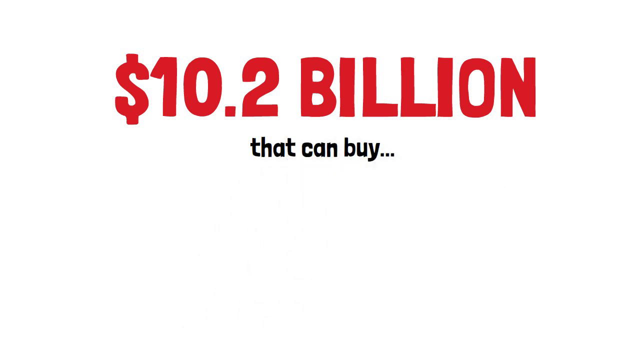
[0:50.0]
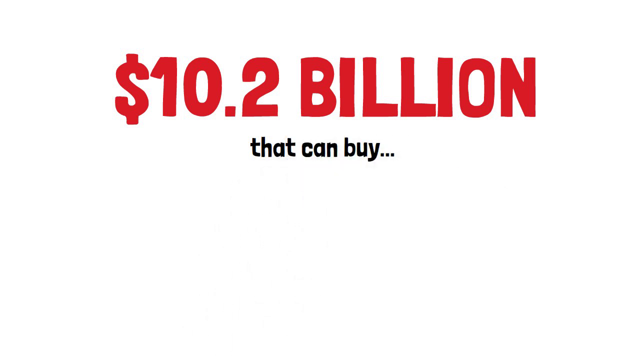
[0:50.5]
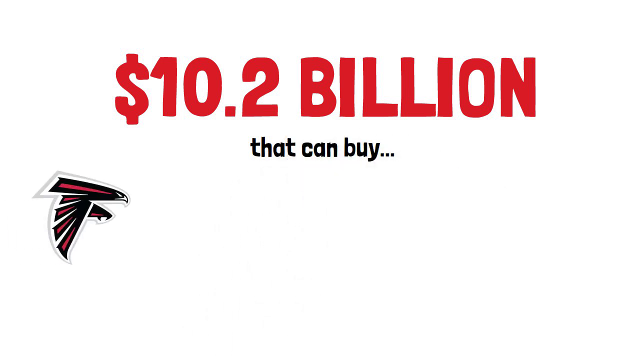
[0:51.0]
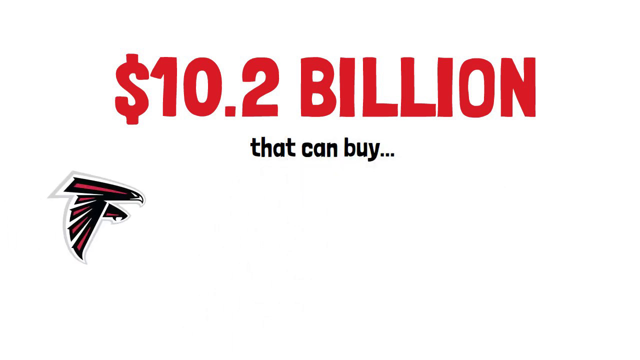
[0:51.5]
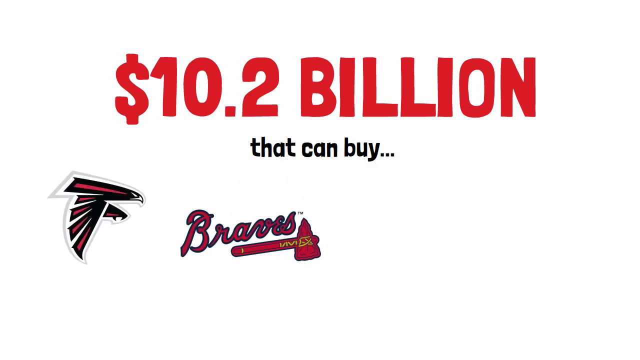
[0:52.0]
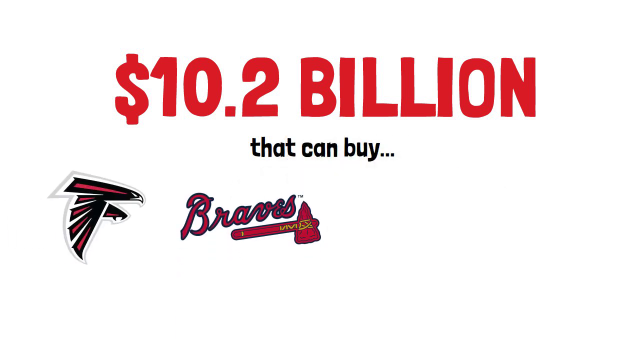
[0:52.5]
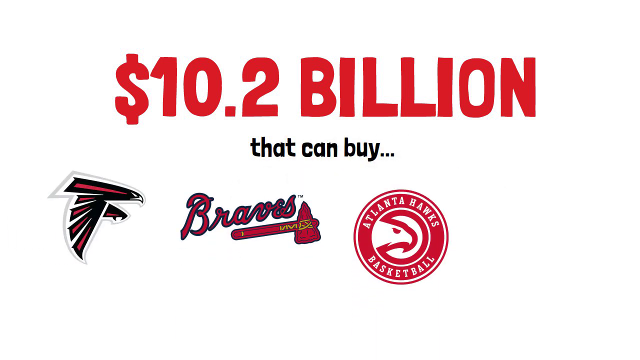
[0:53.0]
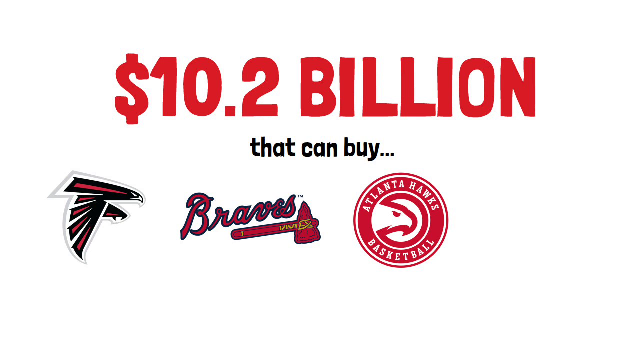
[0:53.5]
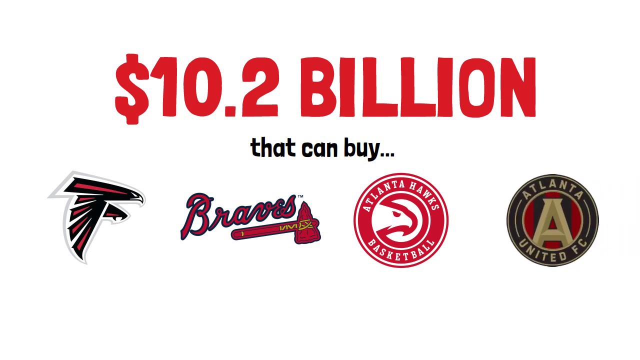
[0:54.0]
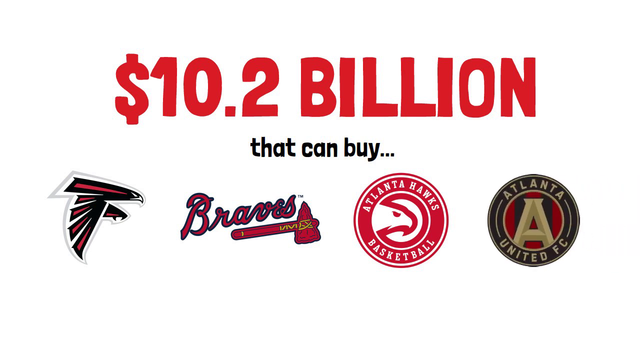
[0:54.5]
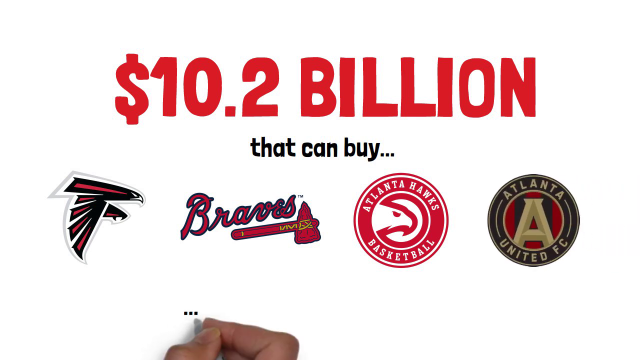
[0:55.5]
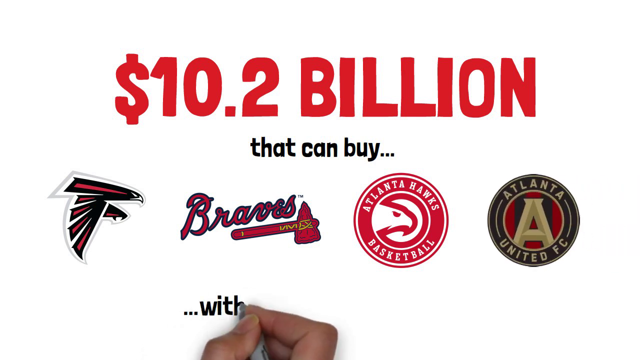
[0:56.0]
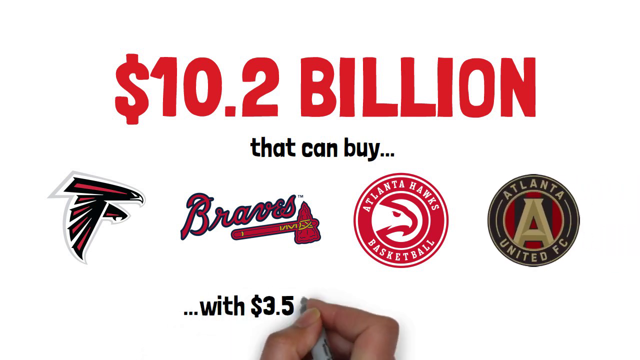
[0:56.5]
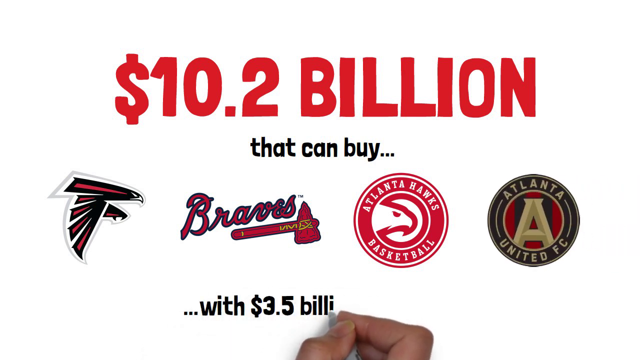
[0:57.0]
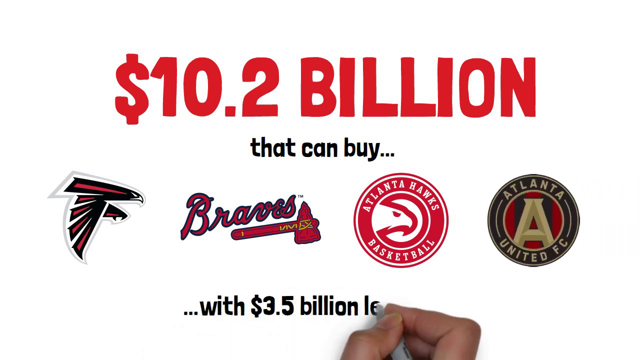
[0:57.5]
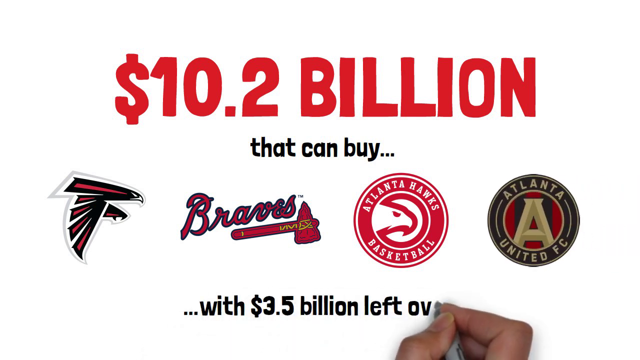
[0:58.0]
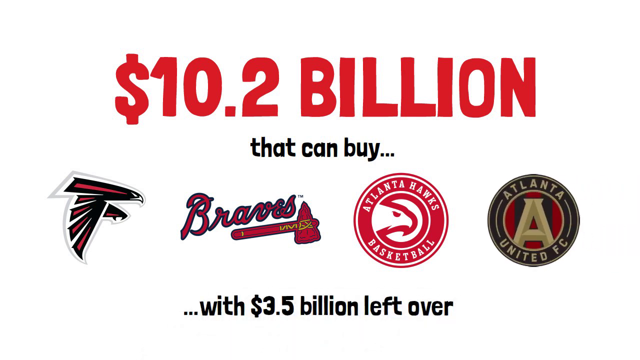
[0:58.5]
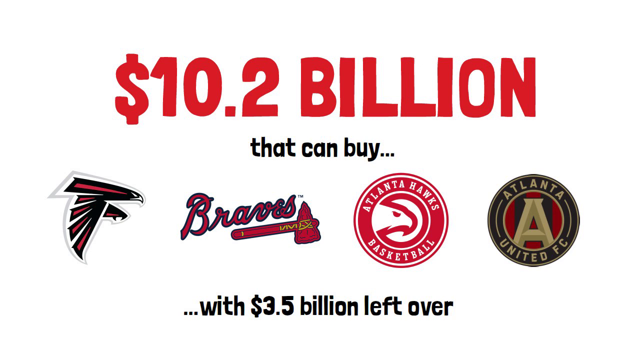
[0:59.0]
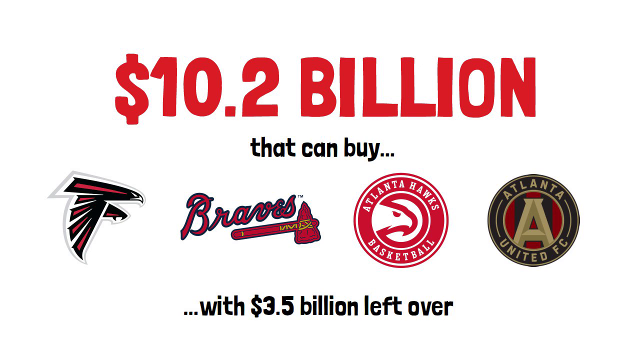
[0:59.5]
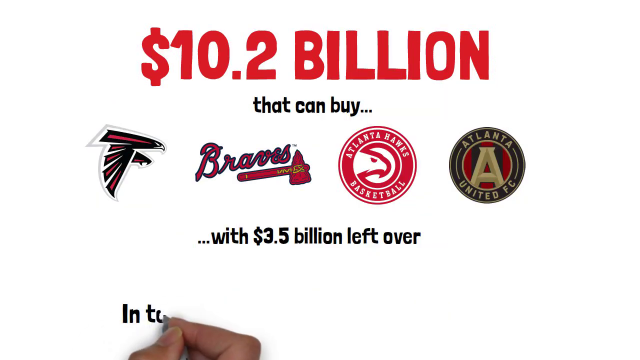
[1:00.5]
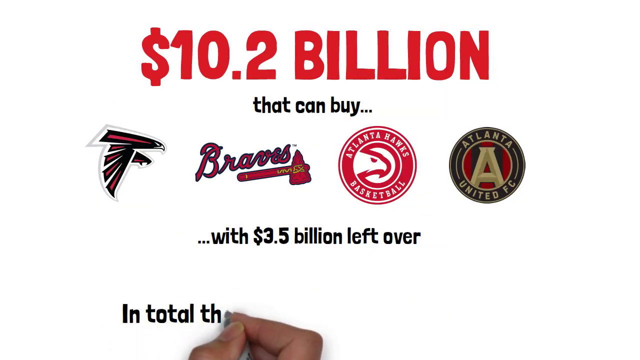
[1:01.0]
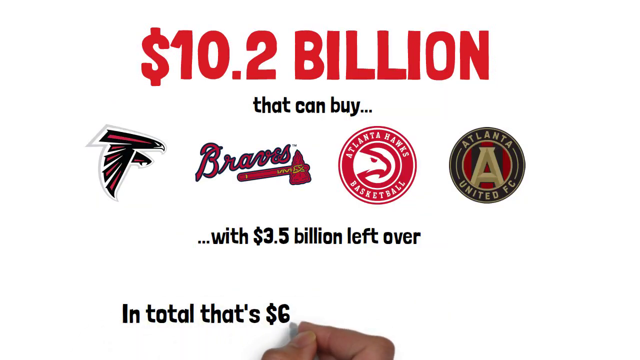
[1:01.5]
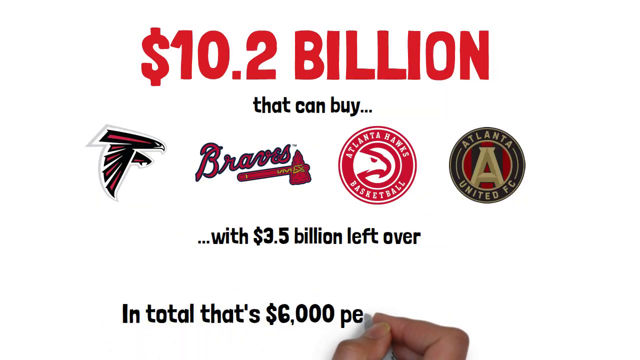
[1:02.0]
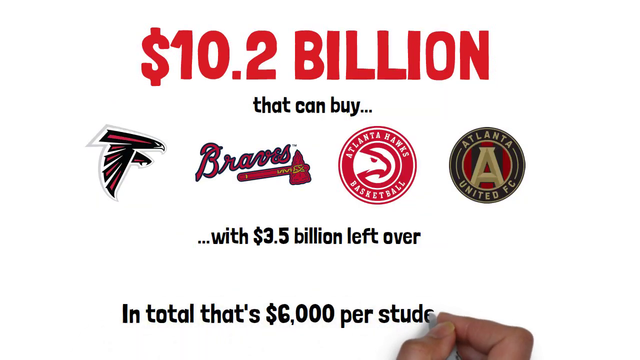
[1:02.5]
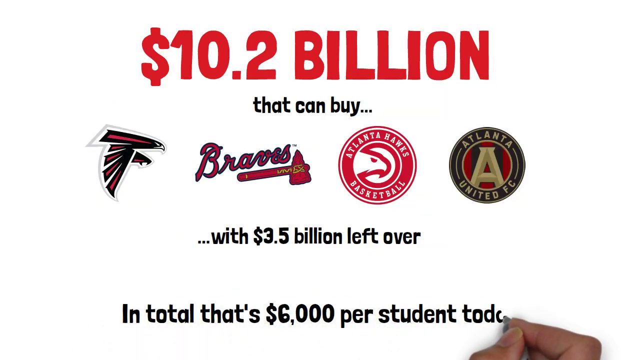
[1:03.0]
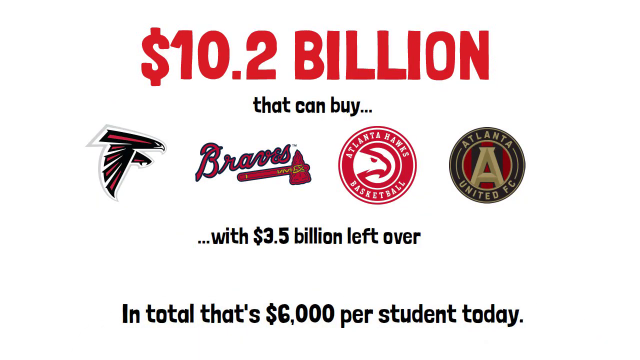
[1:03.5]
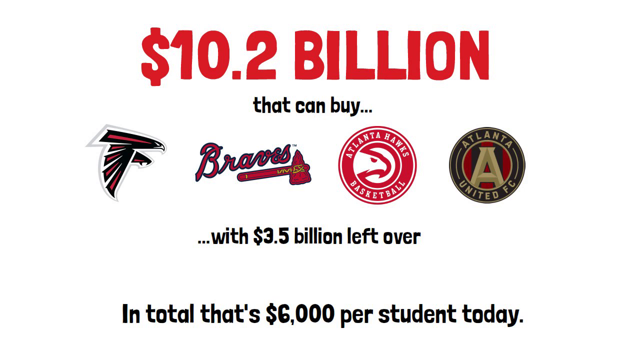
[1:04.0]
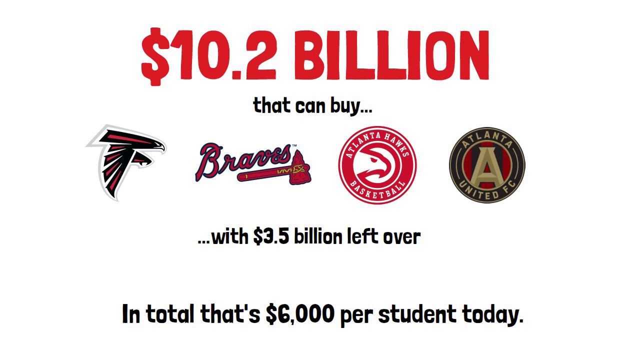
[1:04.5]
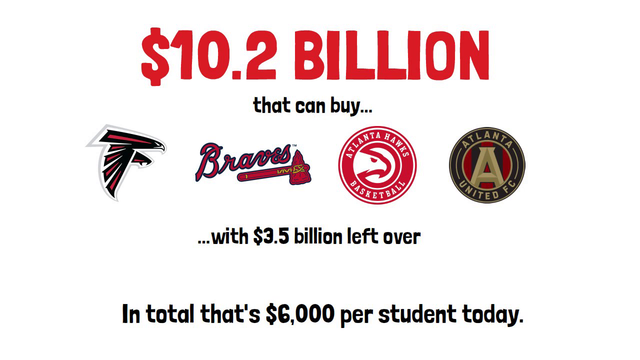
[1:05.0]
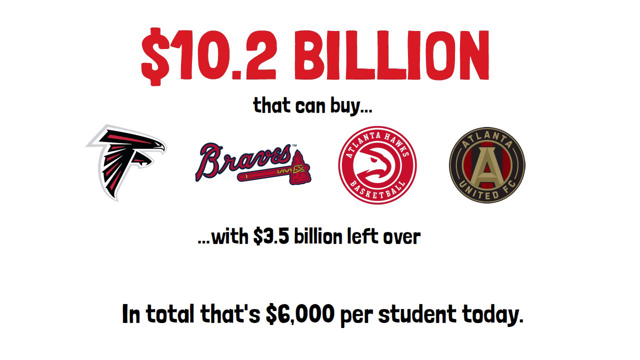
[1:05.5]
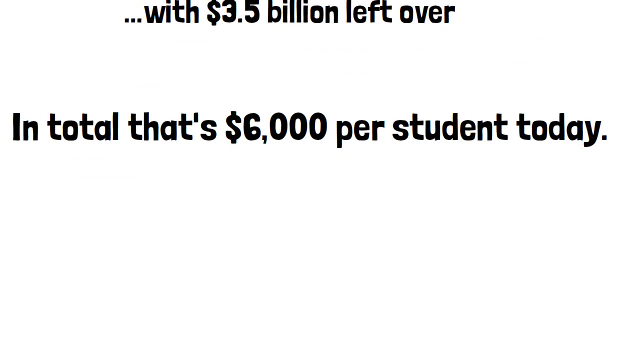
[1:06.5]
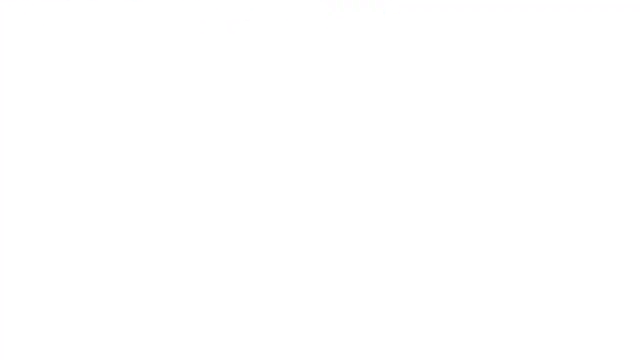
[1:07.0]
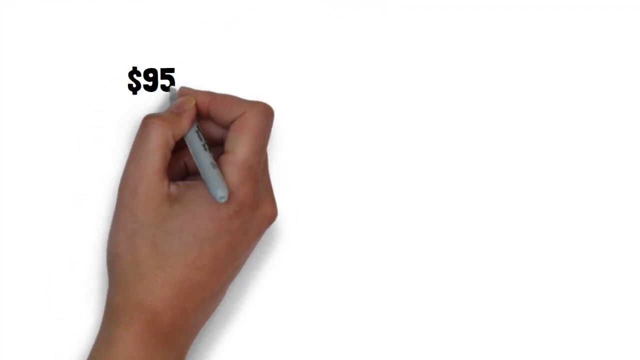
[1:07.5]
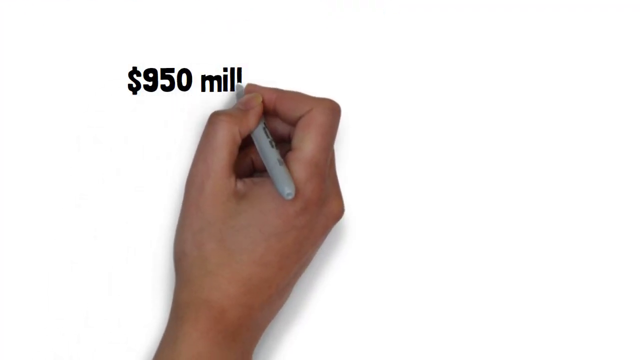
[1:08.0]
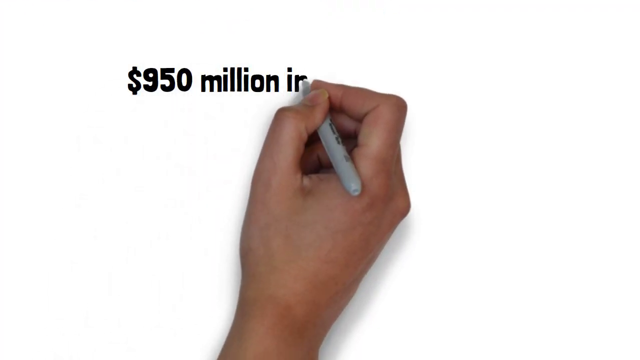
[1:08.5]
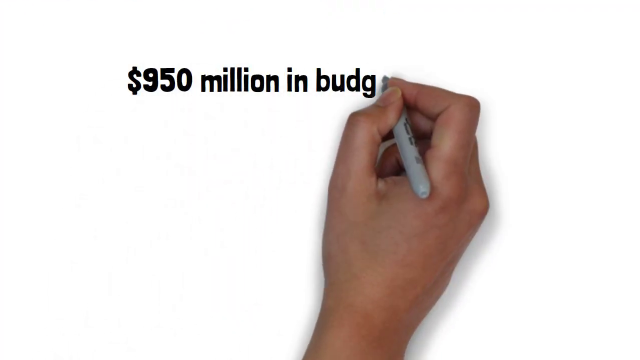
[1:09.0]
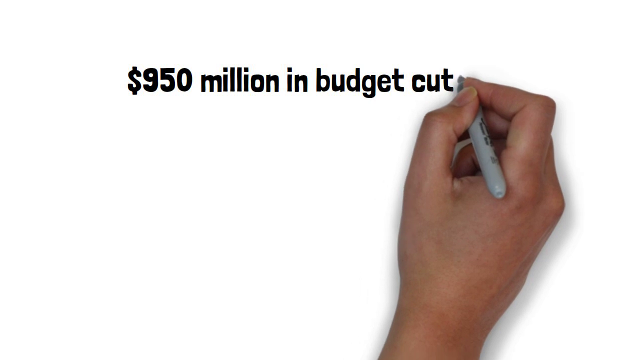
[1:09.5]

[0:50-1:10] On the left side of the screen, a Falcons logo, a Braves logo, a Hawks logo and a United FC logo appear, representing different sports in Atlanta. The four logos appear underneath the previously written text, and more text is written: "... with 3.5 billion left over." The view zooms out to reveal a white area at the bottom, where the hand writes "In total that's $6,000 per student today." The view then zooms in on that text, passing into a white screen in a smooth transition, and the hand comes up with the marker and writes "$950 million in budget cuts for."